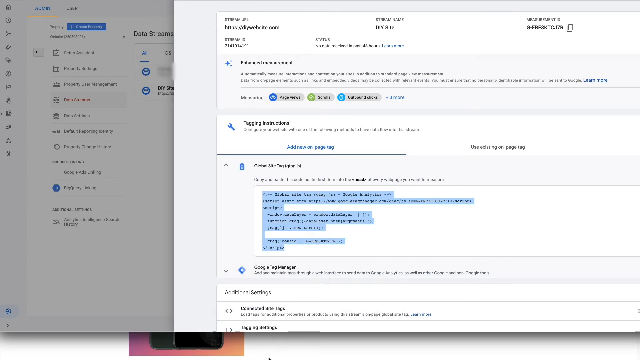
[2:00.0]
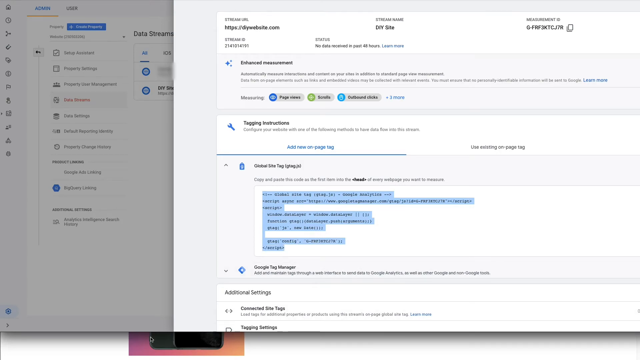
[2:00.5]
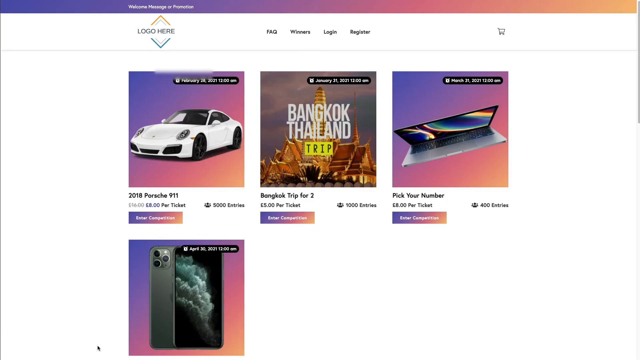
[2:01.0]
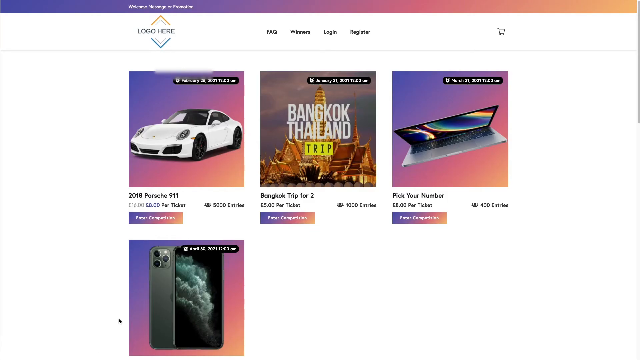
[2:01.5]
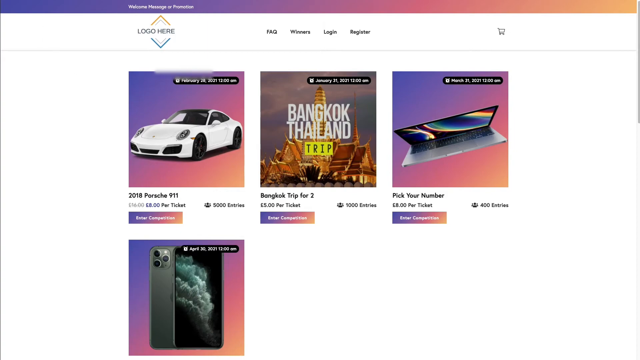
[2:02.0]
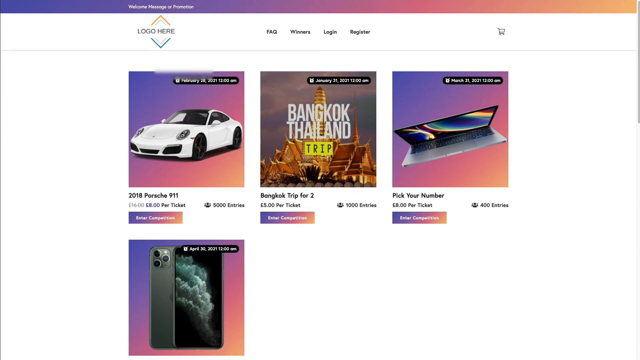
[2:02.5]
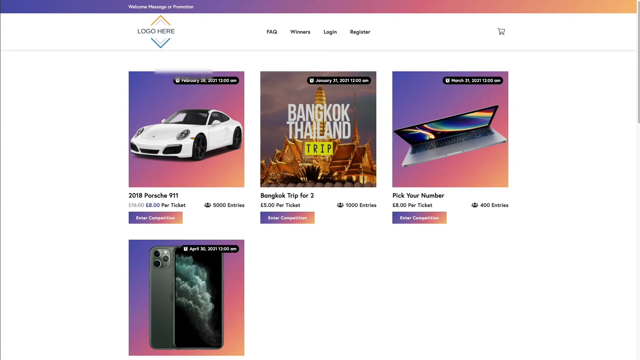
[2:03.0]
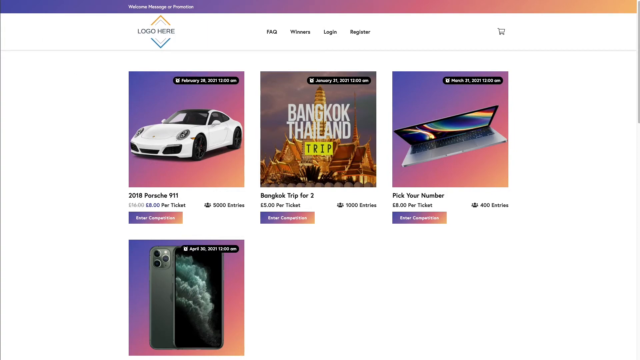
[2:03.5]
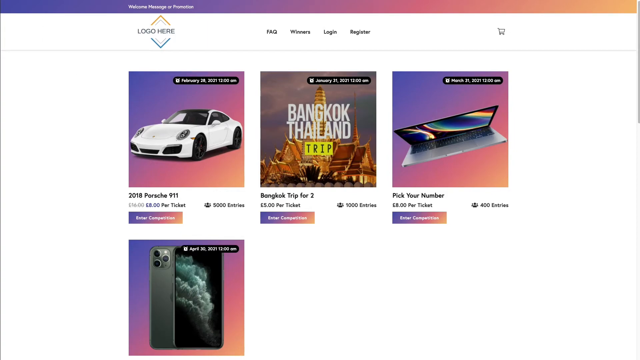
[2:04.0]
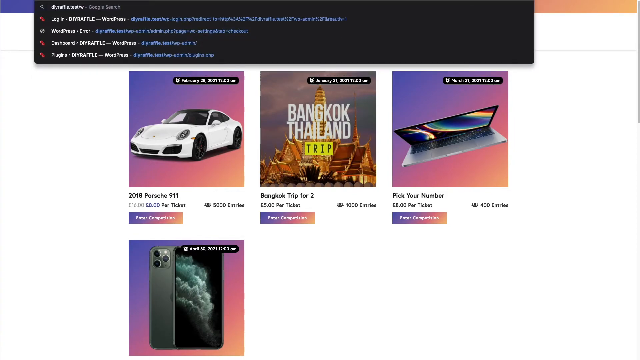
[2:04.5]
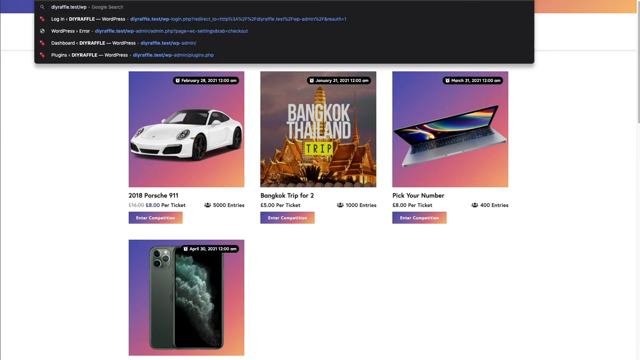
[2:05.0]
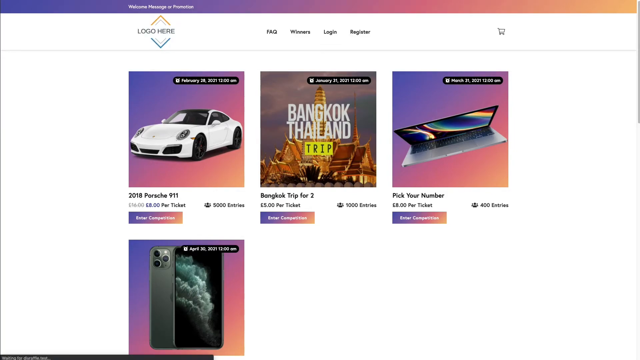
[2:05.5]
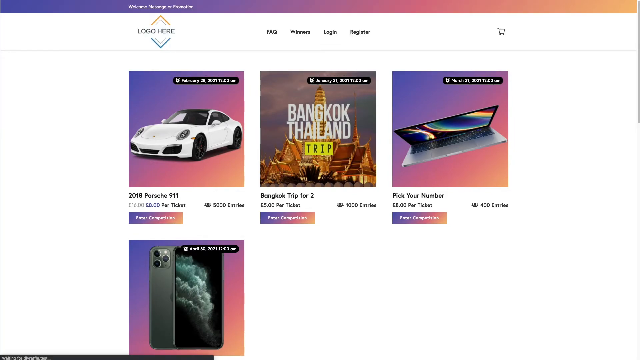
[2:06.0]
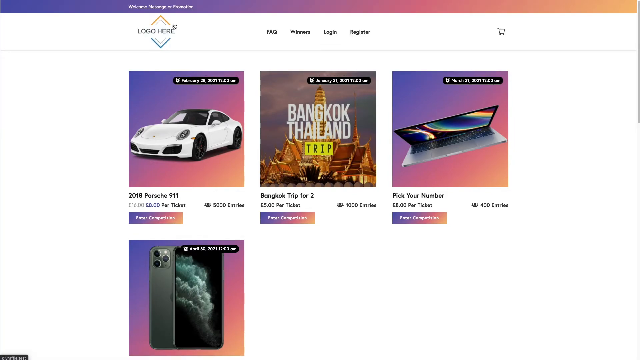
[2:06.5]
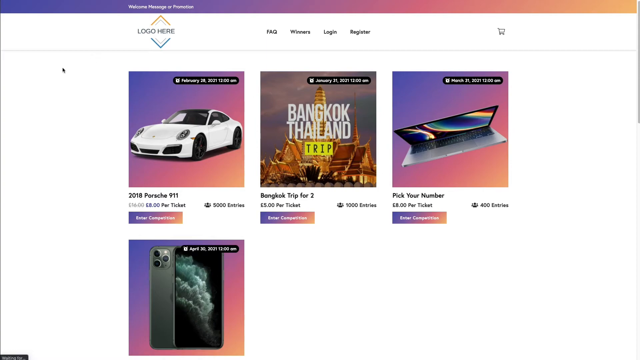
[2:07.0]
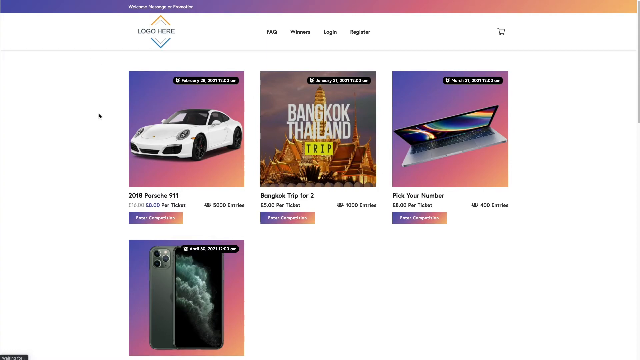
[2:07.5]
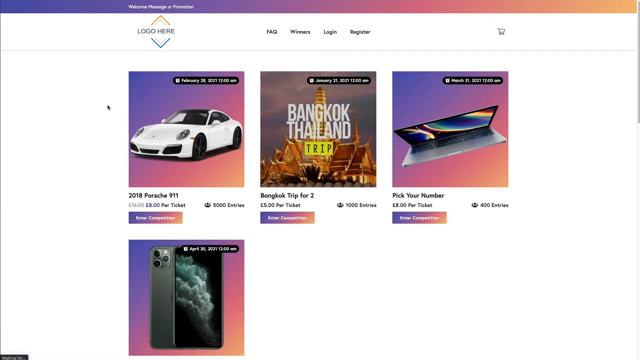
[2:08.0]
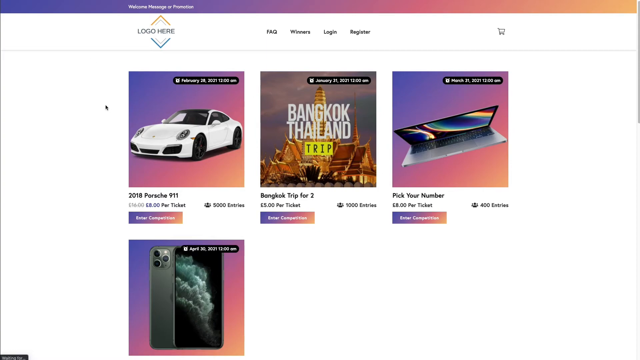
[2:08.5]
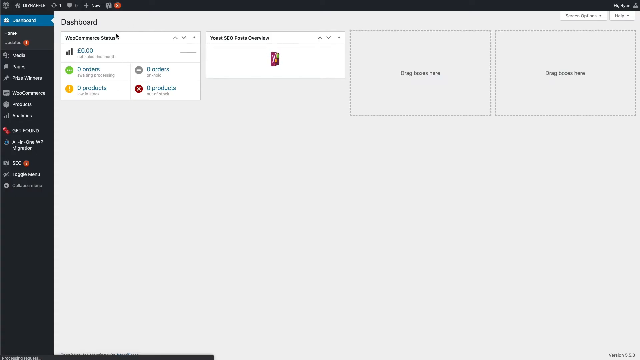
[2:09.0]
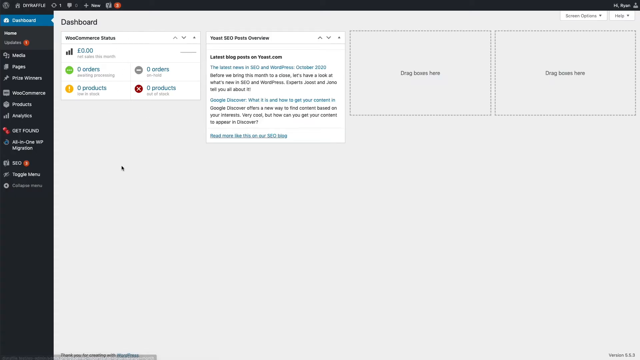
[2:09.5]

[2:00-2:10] The person apparently pulls up a specific website to look at data stream information and selects something under the site tag, which is only partly legible. The page appears to say welcome, though it is hard to read. There is a space for a logo and several images. The menu includes the logo spot, FAQs, winners, login, registration, and what is assumed to be a shopping cart. One image shows a white 2018 Porsche 911 with information for purchasing a ticket; it says 5,000 entries are available, apparently for a competition, and the site possibly seems to be some sort of auction site. A date at the top of the image reads January something, 2021. Next is "Bangkok, Thailand trip" with a picture of a tour site in Bangkok, "Bangkok trip for two" underneath, the price per ticket, a button to enter the competition, and apparently 9,000 entries. The next image looks like a partially open laptop, with a date apparently reading March 31st, 2021, "pick your number" underneath, a dollar amount per ticket, and 4,000 entries available. On the next row is what looks like a cell phone with a date of April something, 2021. The view then goes back to the plugin menu, and a dashboard shows commerce status with dollar amounts, number of orders and number of products.